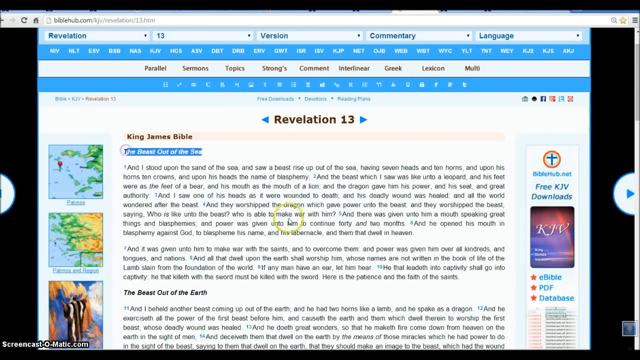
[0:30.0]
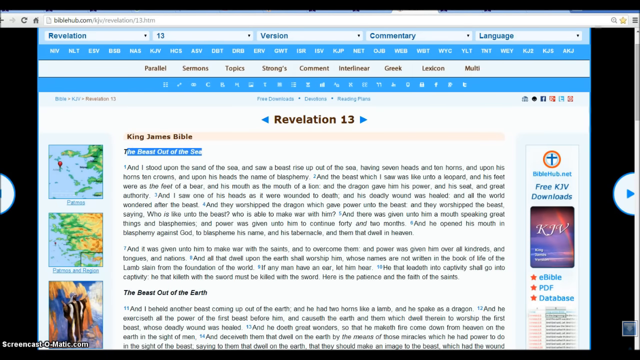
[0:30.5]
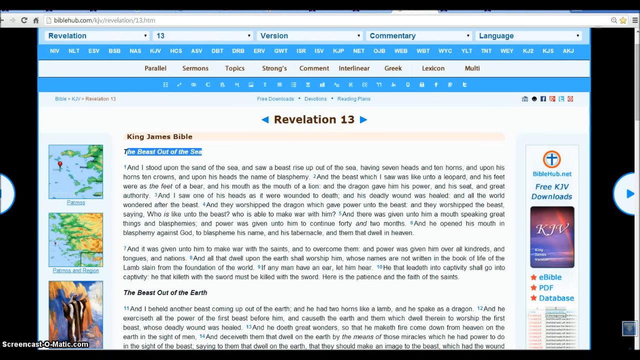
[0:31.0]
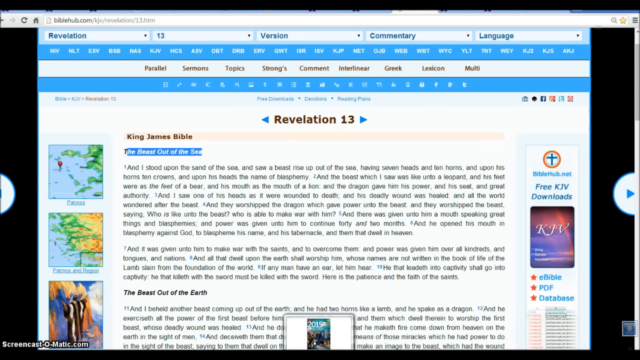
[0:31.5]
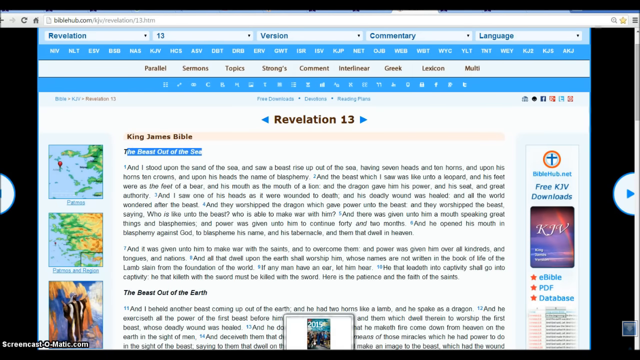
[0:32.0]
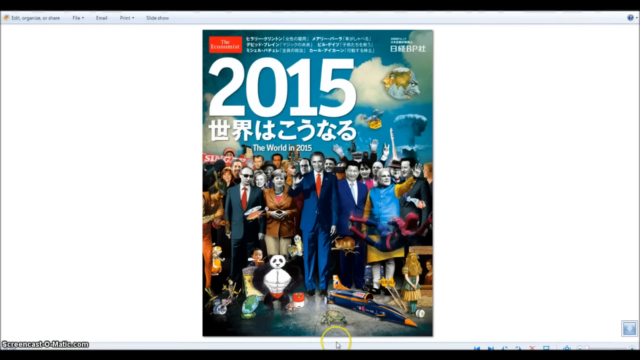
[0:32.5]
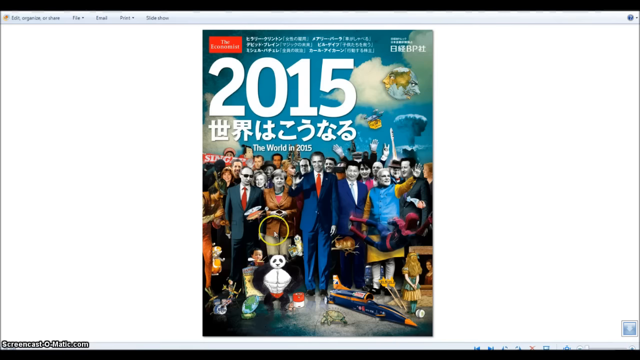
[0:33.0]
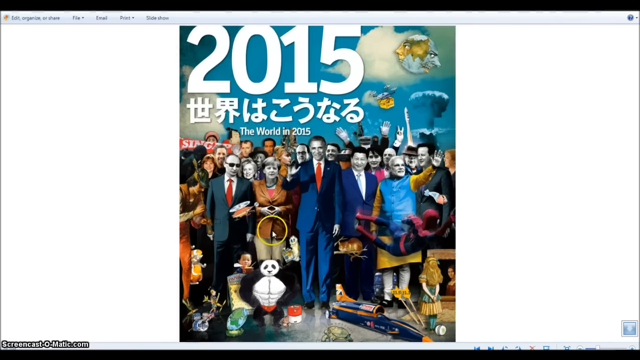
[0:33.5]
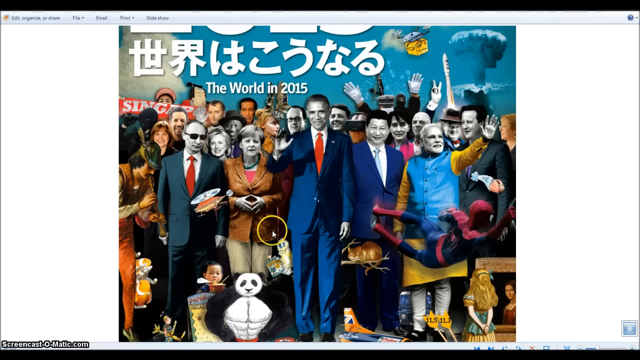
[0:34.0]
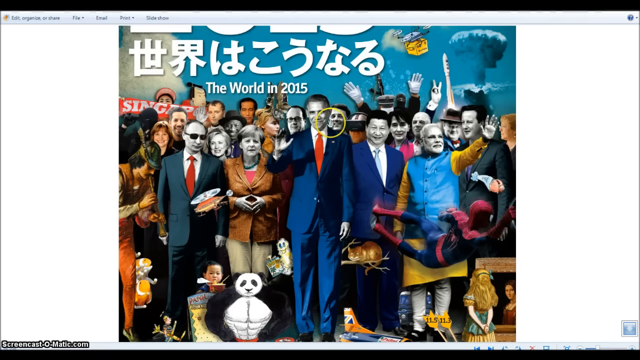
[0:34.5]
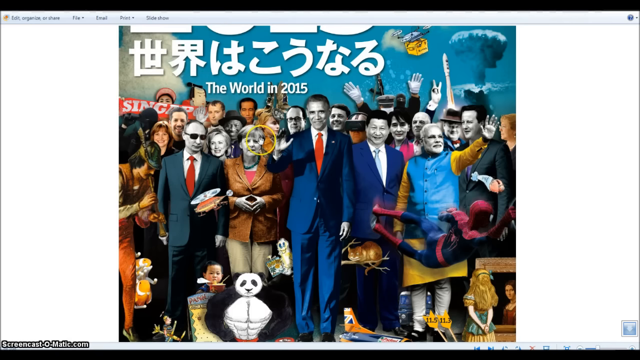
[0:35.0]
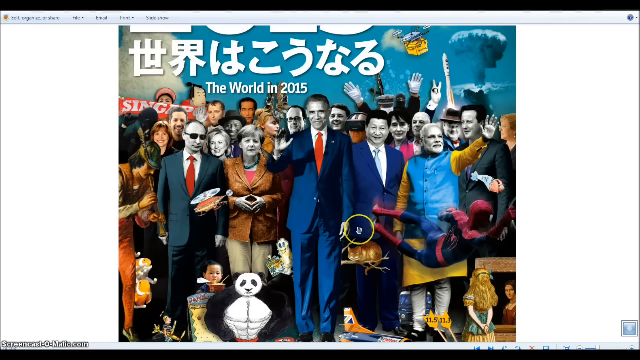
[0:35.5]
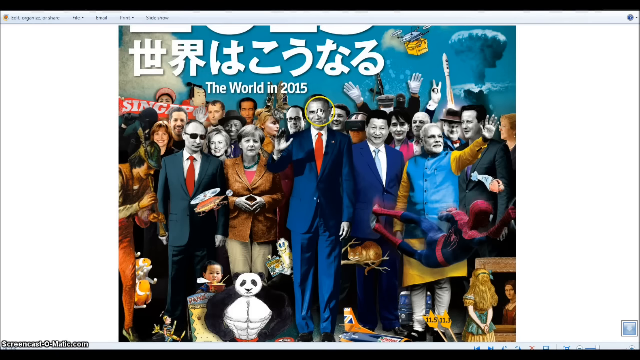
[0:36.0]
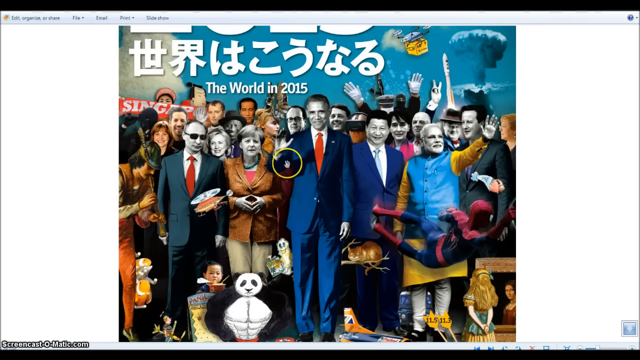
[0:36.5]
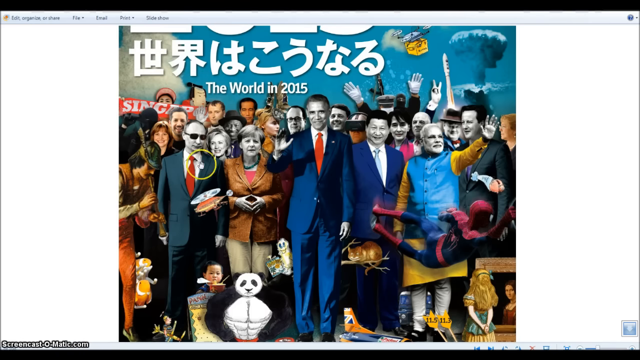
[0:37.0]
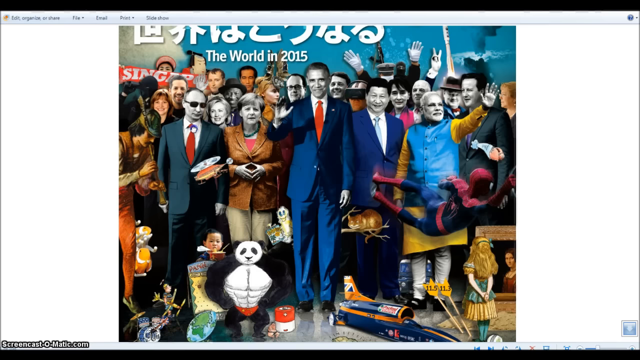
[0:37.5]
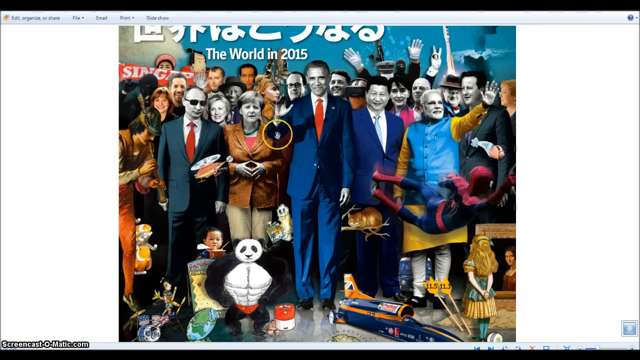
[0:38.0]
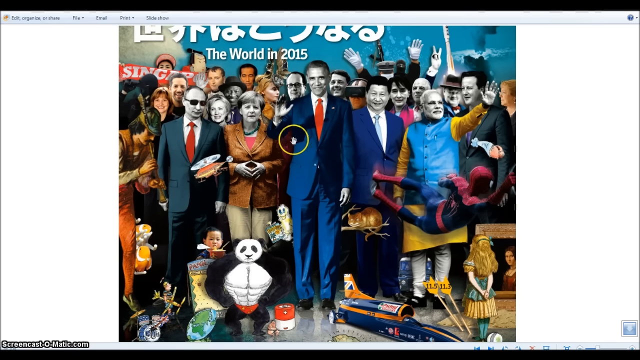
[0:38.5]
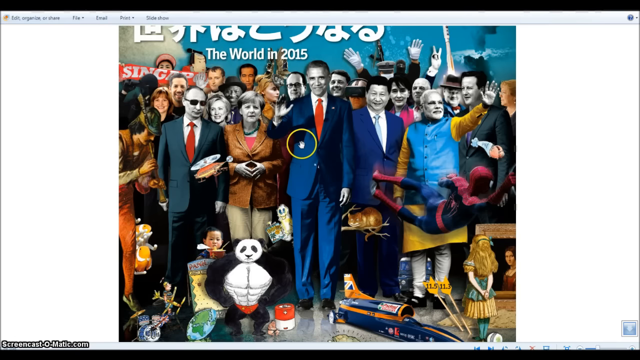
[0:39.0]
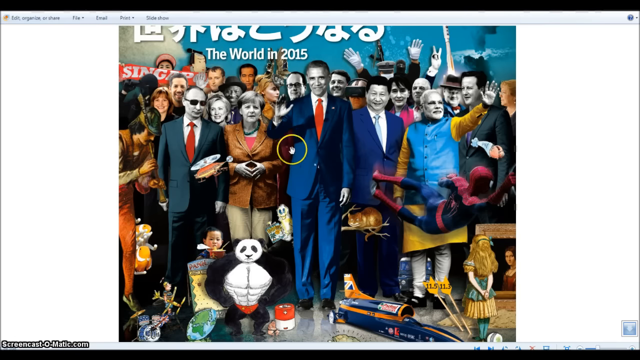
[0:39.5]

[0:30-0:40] The cursor, surrounded by a yellow circle, moves over an image of the world in 2015 that resembles a comic book. It shows various people who look like movie characters, including Spiderman, along with President Barack Obama, and there is Chinese writing on it. The background has something blue that looks like water, with smoke at the top right, plus a panda, cats and other things. The view zooms, and the cursor circles over Barack Obama's head, other people's heads and their clothes, including Obama's suit.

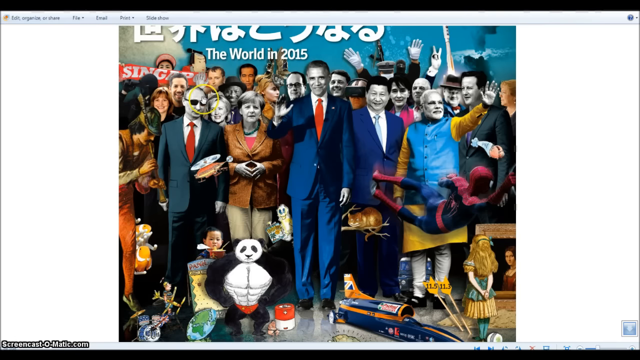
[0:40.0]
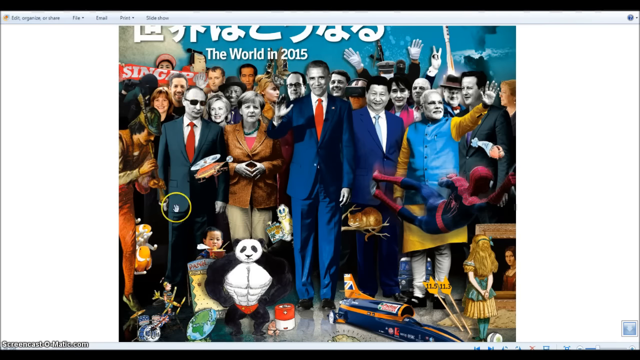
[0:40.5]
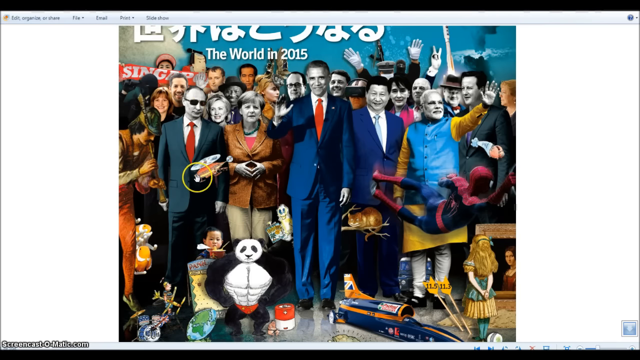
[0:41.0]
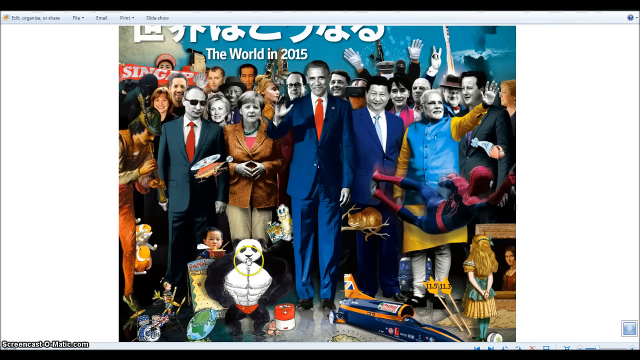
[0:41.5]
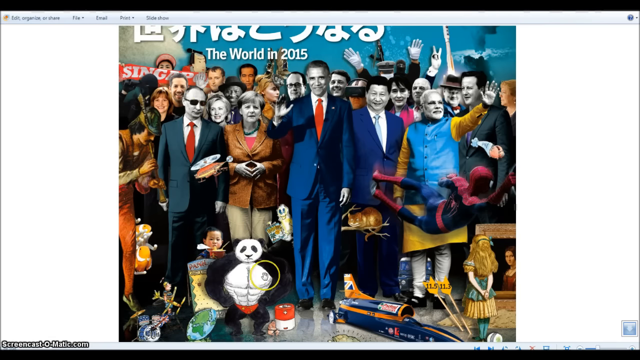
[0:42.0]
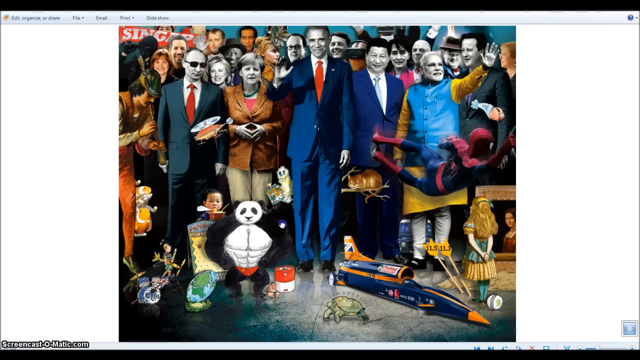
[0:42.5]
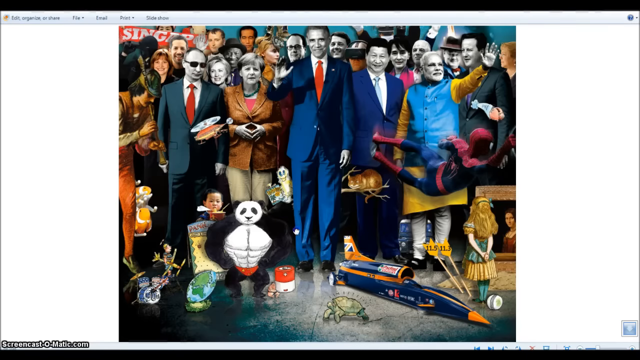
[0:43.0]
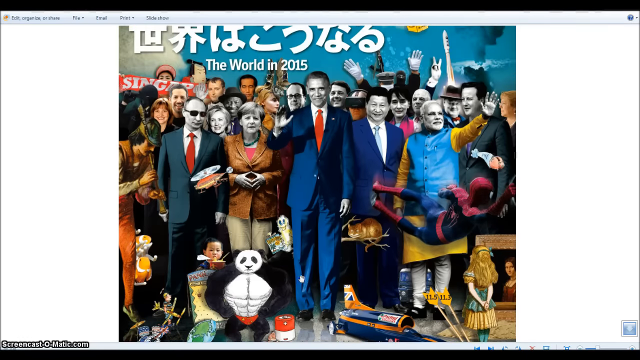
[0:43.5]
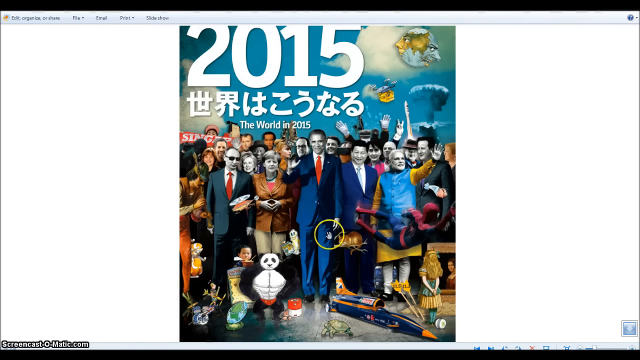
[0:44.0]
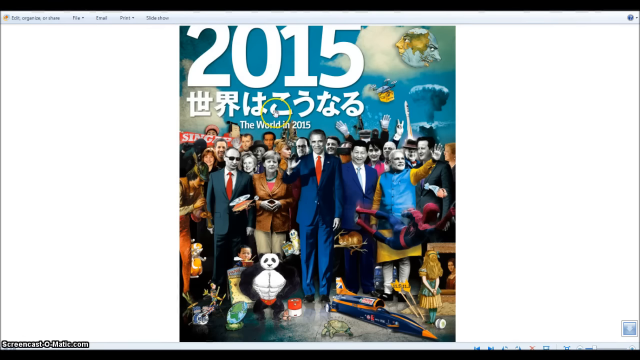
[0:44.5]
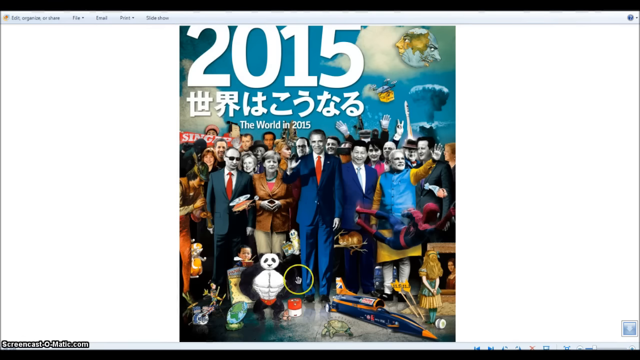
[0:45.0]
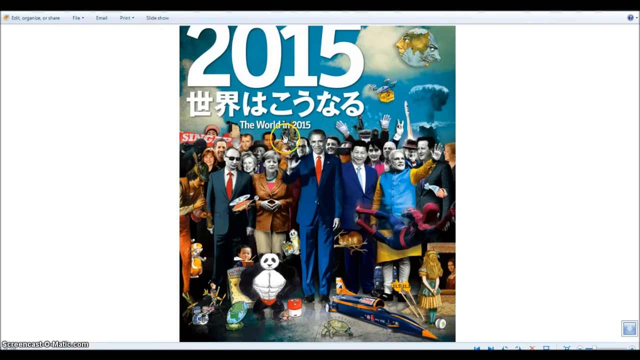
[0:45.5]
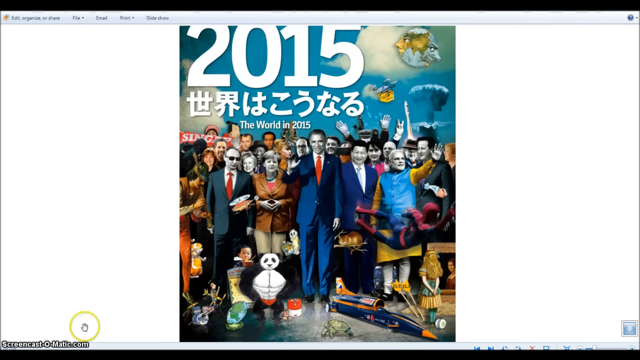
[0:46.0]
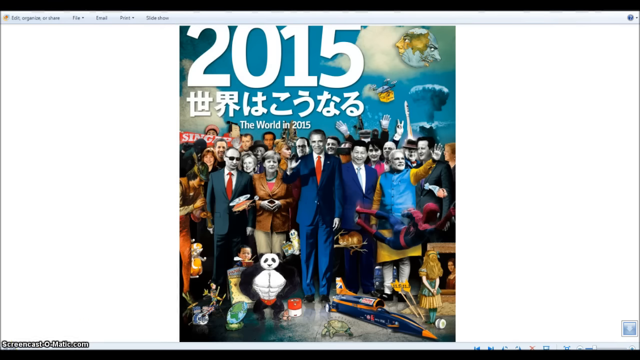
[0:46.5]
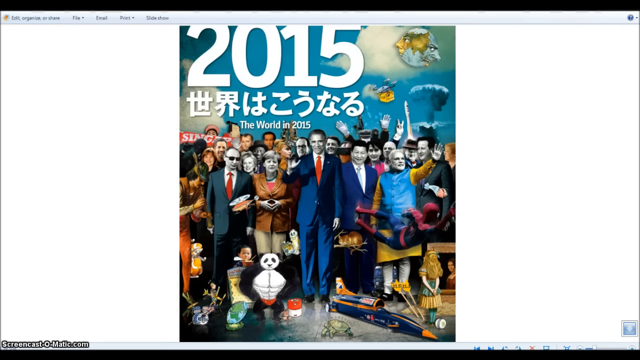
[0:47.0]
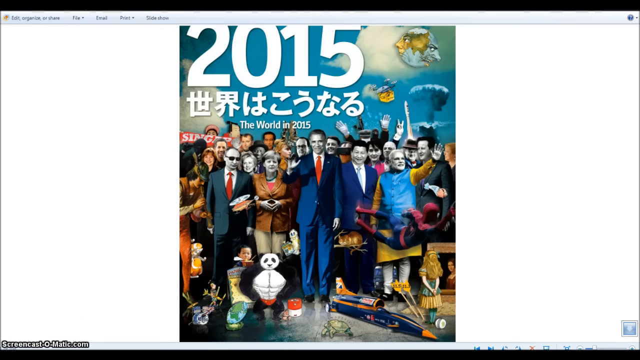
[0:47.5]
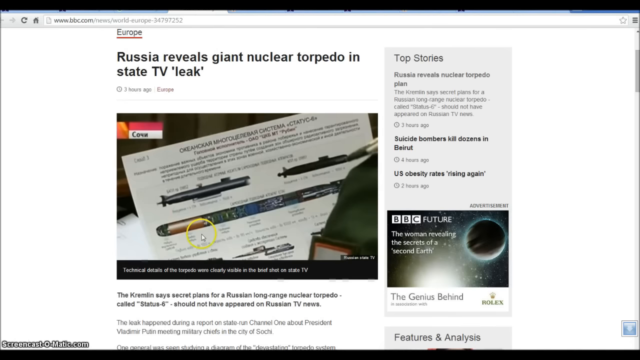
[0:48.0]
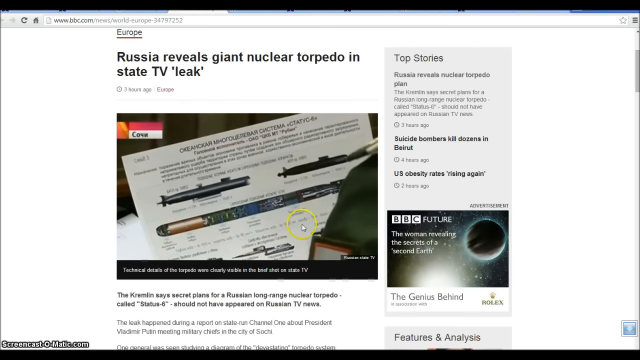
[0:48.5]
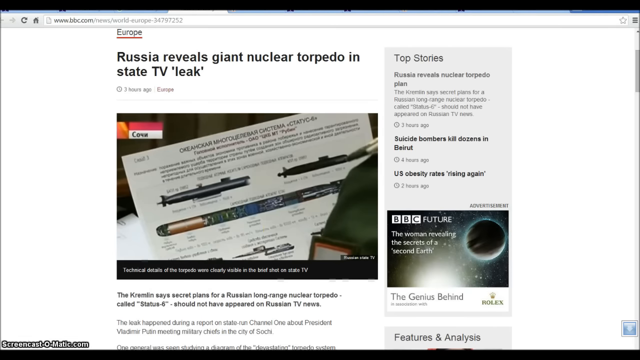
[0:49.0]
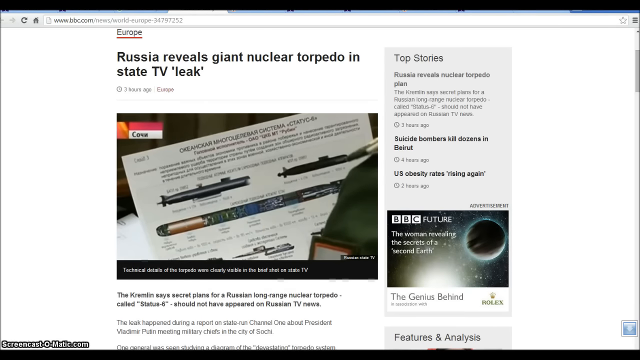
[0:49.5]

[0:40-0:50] The cursor circles on Barack Obama's legs, then the view zooms out and returns to the article about Russia revealing a giant nuclear torpedo, where the cursor again circles over the pictures on the newspaper website. The circle around the cursor is large enough to cover a person's head in a drawing, and it keeps circling things in the picture of the world in 2015. The page has a white background and is shown on a laptop screen.